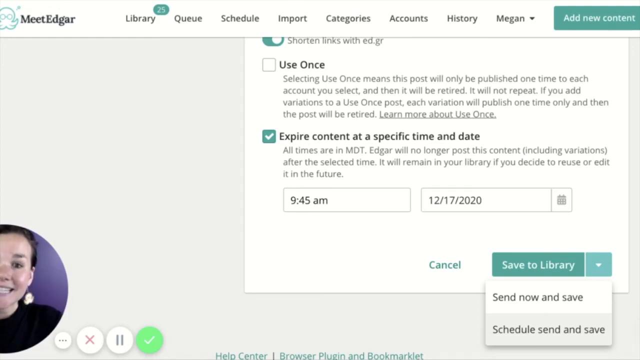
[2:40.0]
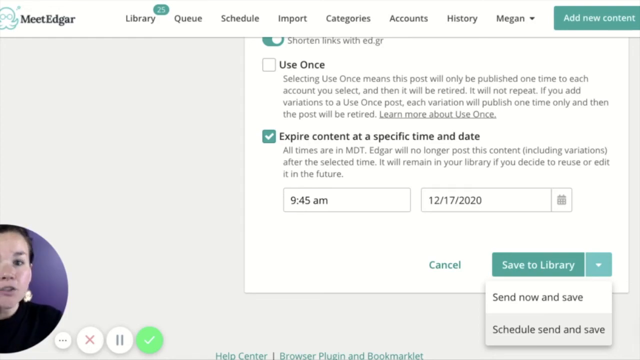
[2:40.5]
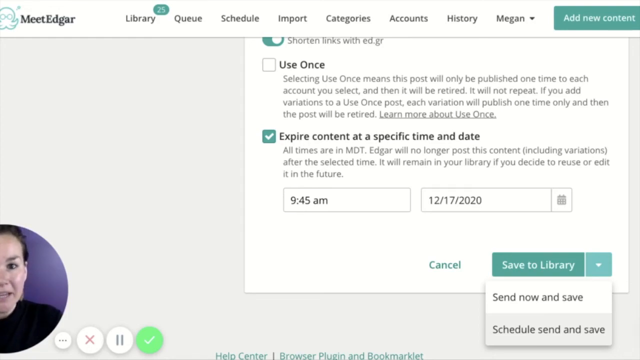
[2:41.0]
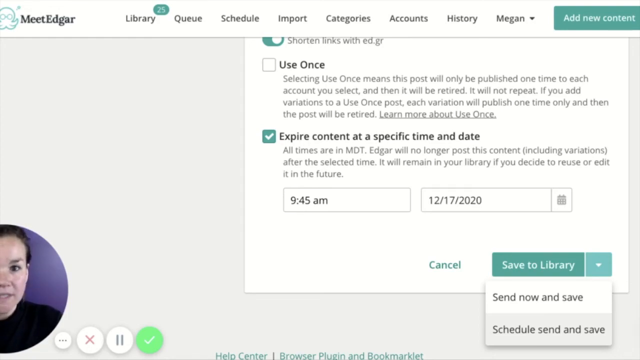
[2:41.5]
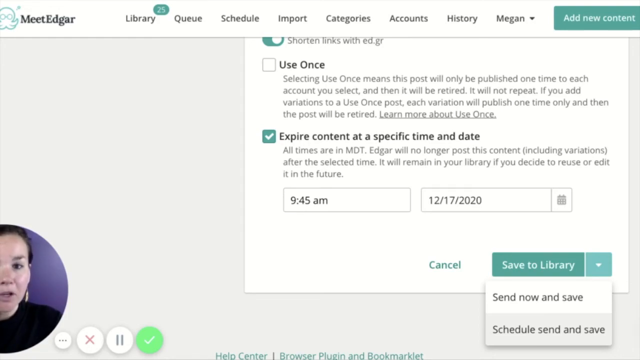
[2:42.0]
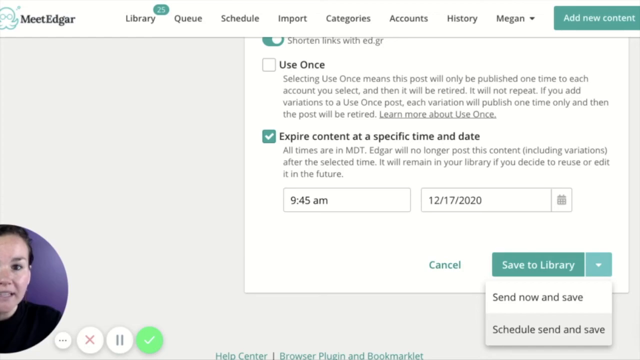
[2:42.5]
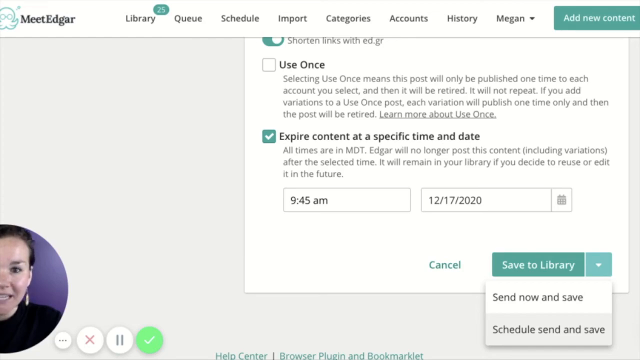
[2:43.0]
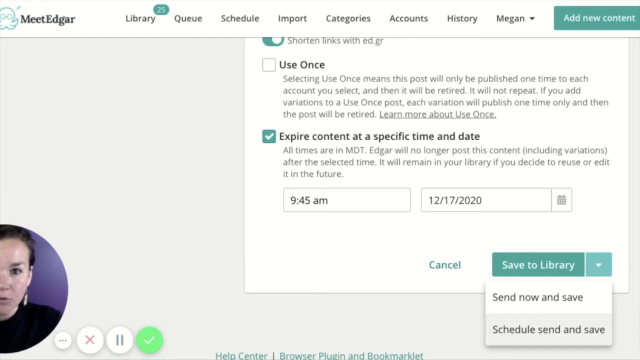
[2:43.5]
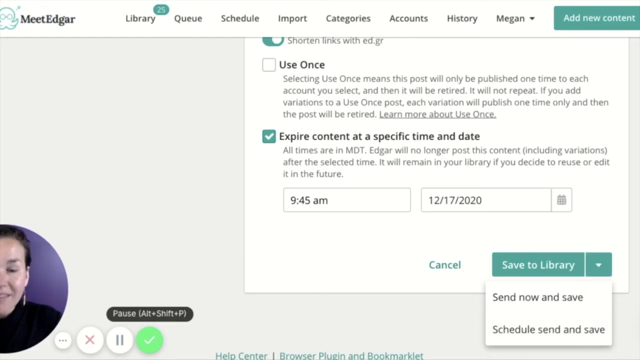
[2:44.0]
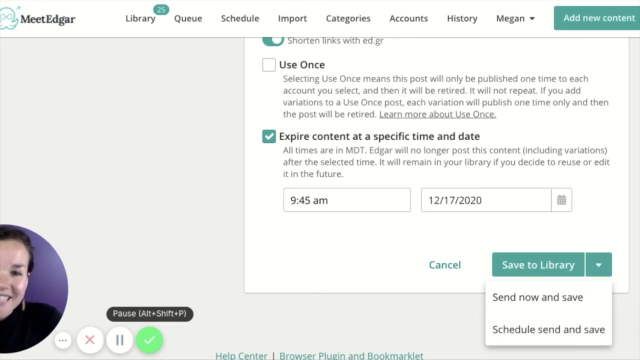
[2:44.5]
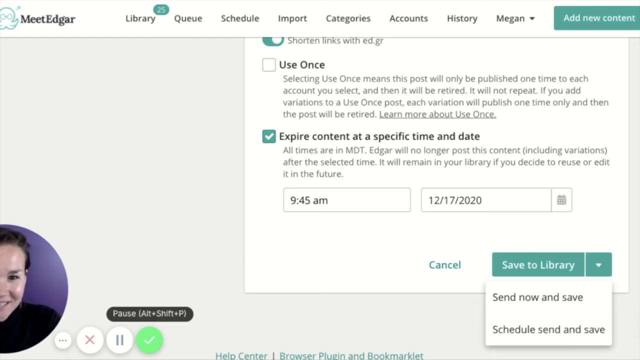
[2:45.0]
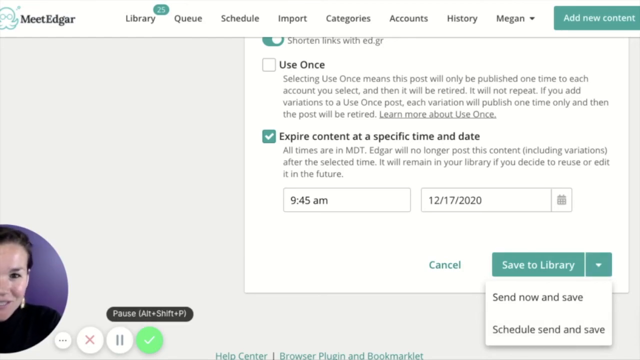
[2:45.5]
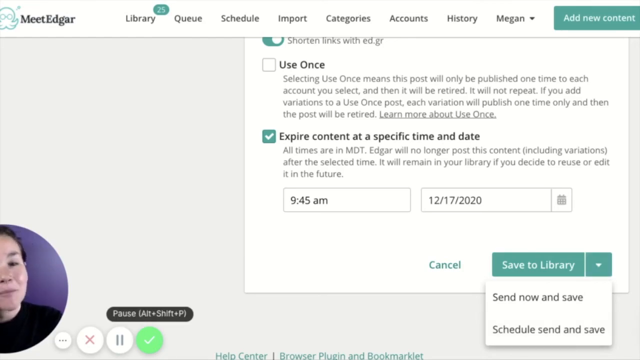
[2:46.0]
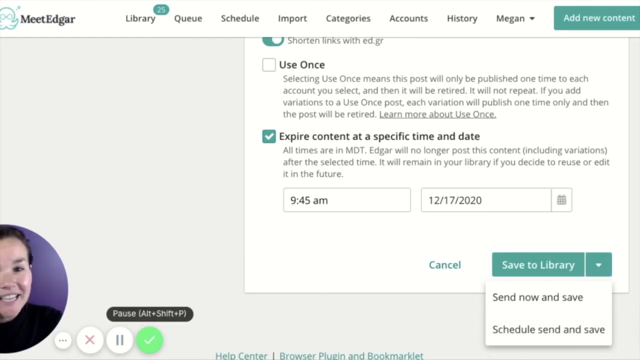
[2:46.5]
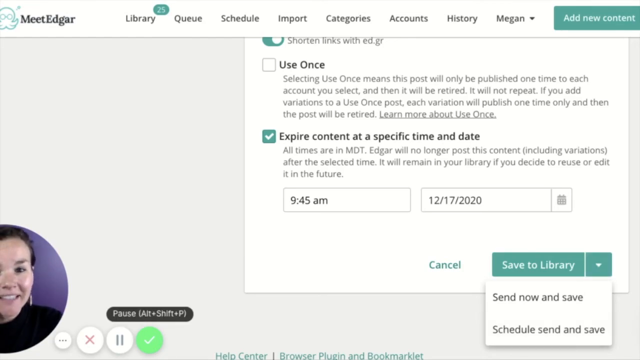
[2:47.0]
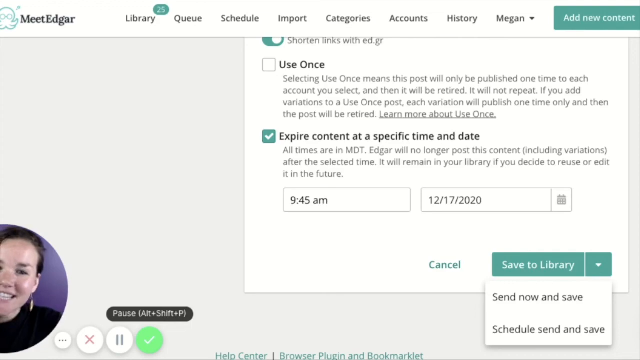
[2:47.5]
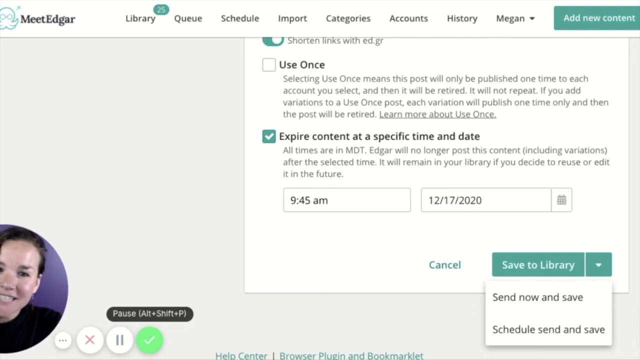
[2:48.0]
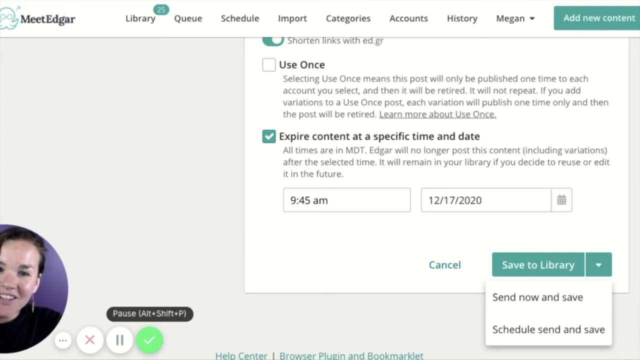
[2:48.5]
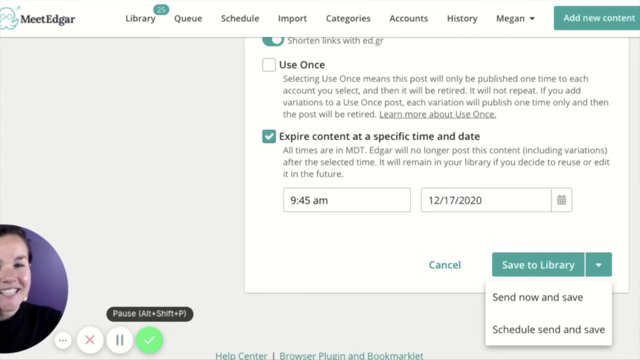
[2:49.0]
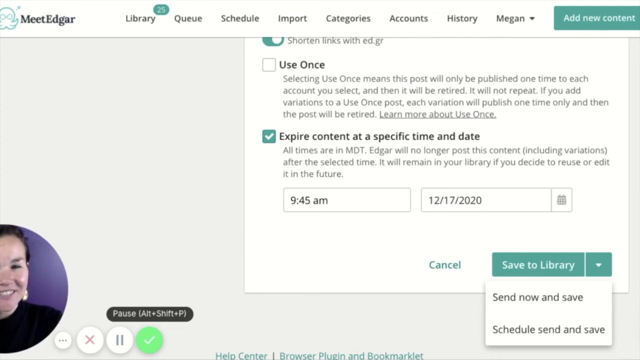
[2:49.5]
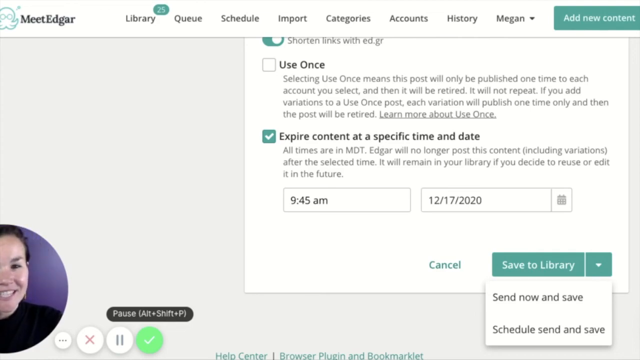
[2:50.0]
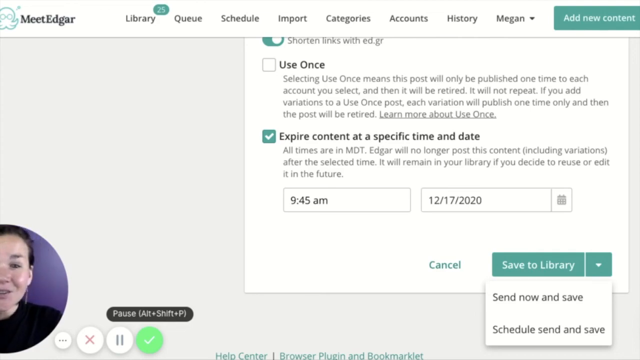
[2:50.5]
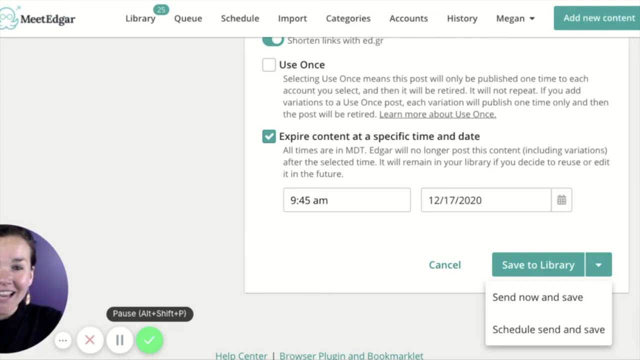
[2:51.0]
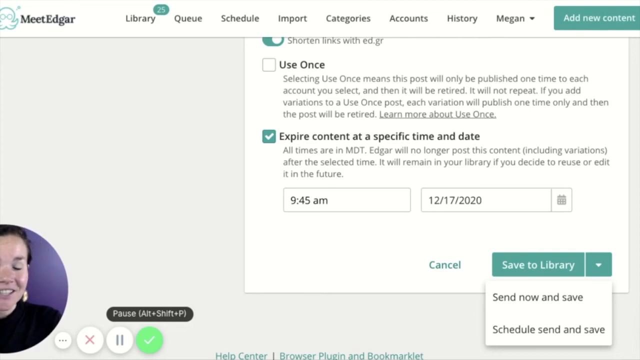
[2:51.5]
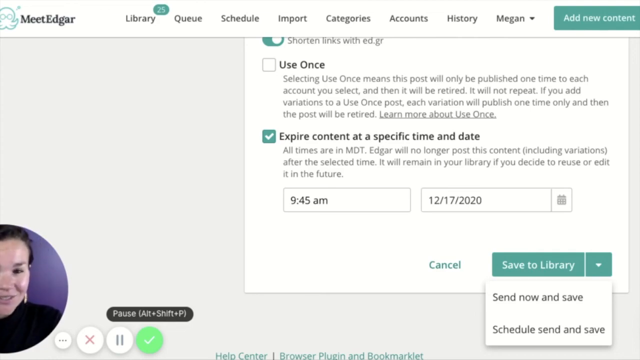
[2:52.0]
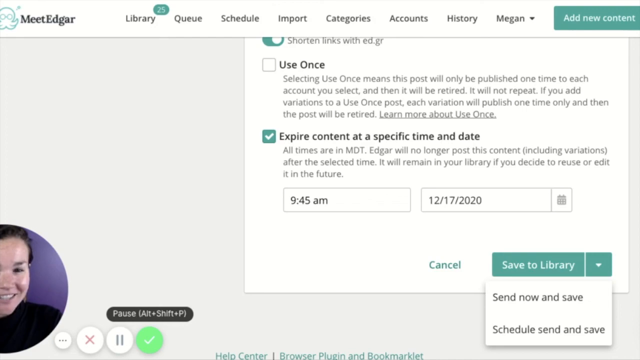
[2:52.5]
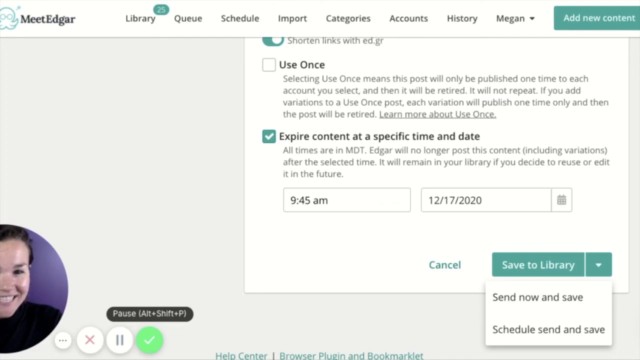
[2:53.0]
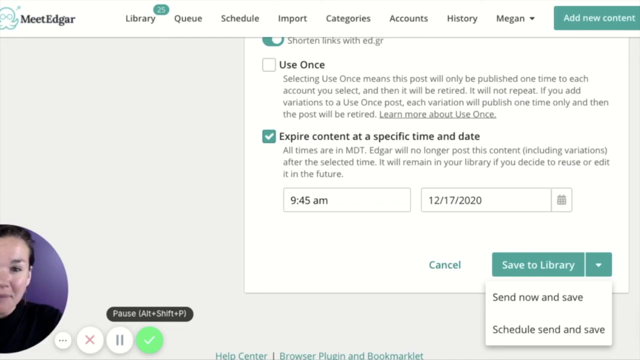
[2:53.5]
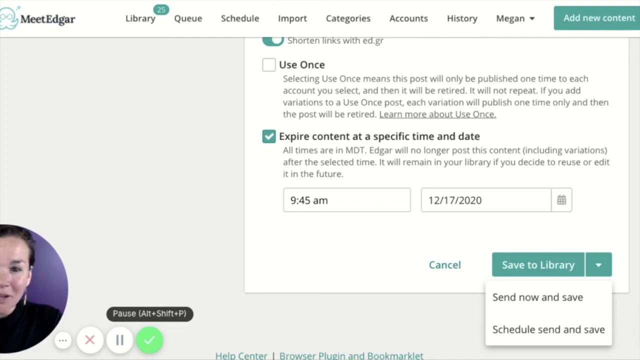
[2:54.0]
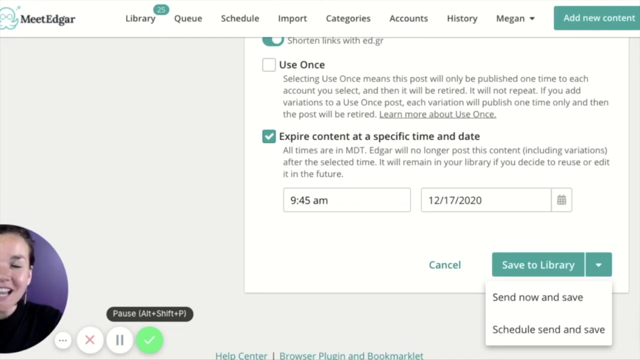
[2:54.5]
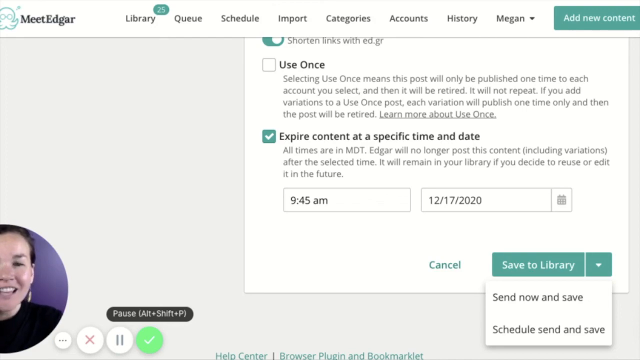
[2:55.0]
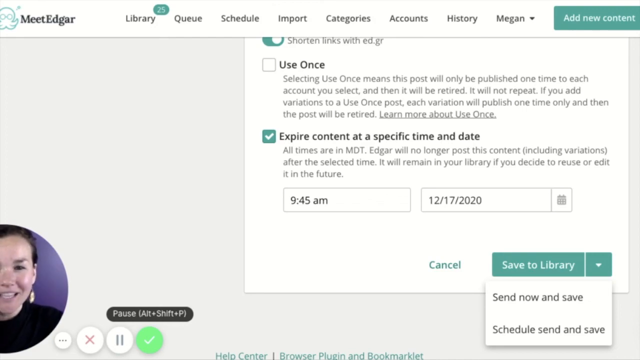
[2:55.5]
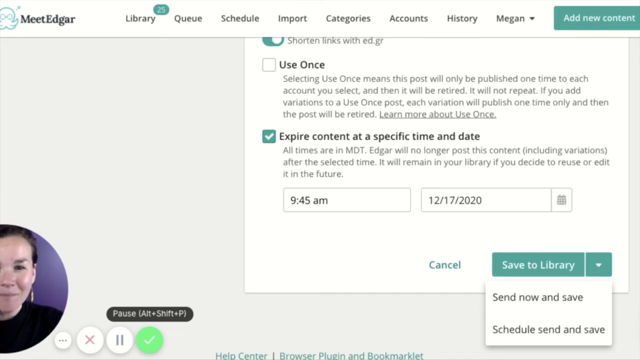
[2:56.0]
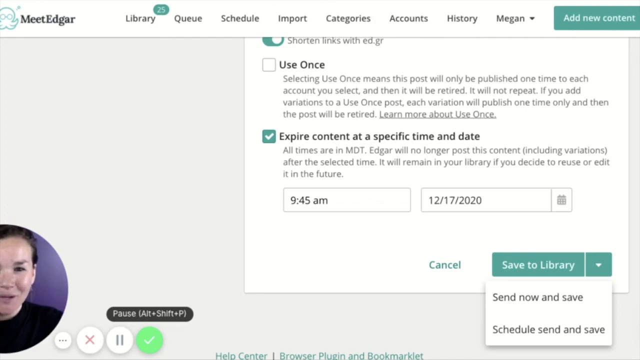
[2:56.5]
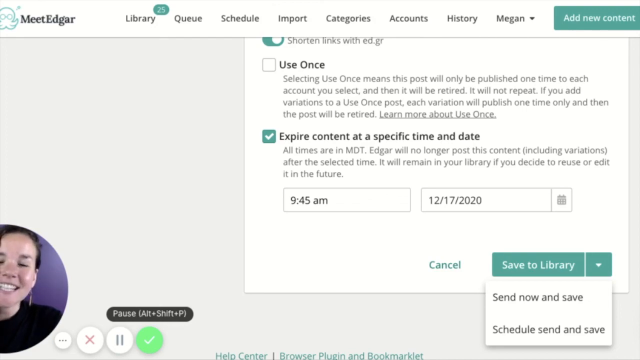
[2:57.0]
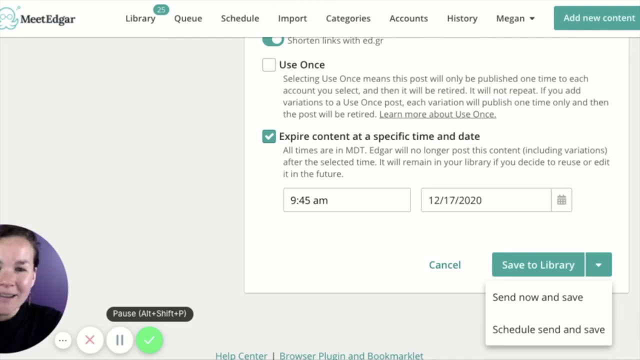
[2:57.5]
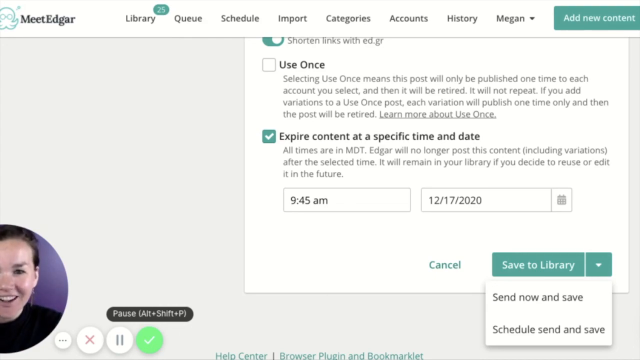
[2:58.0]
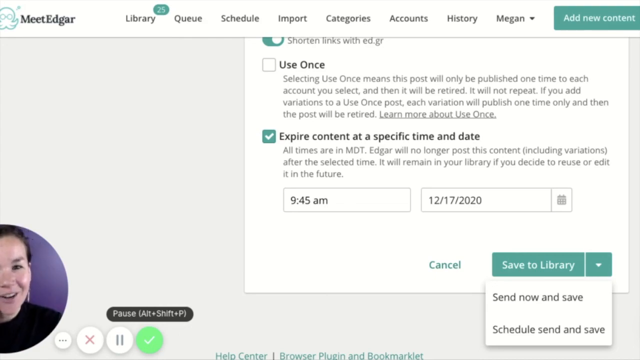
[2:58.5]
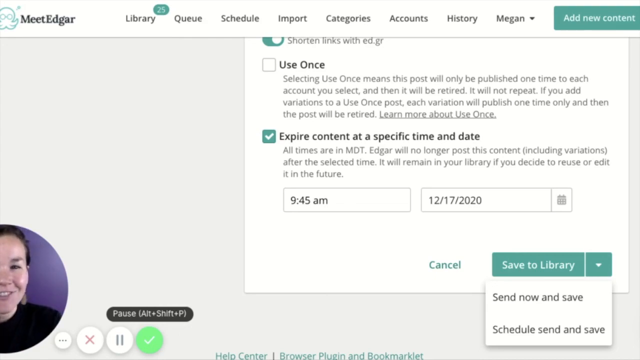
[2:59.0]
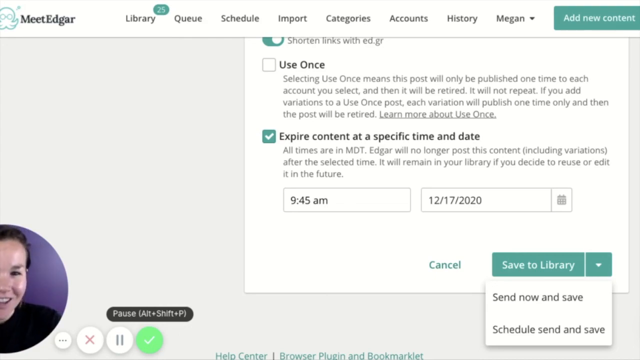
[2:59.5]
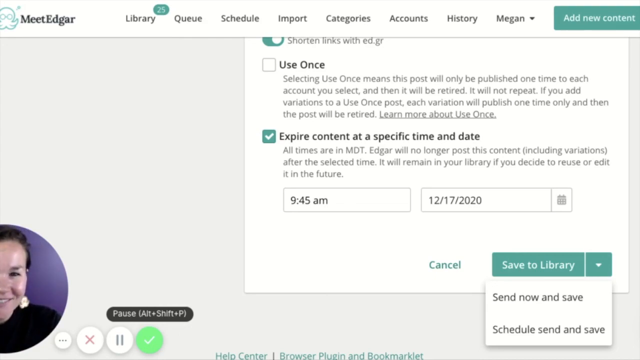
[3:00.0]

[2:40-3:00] The dark-haired woman briefly continues with the advanced settings section, but soon appears to be wrapping up the video, smiling. The screen still shows the Advanced Settings page. At the top are the "MeetEdgar" text with the animated icon on its left, and to the right the sections Library, Queue, Schedule, Import, Categories, Accounts, History, and Megan, possibly the black-haired woman's name. To the right of those is white text on a green background reading "Add New Content." Below the top of the page are the "Use Once" and "Expire Content at a Specific Time and Date" checkboxes, and below them the Time and Date, showing 9.45am and 12/17/2020. Below that are the Cancel and Save to Library buttons.